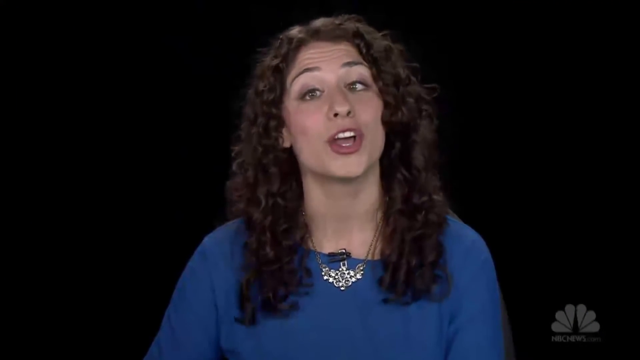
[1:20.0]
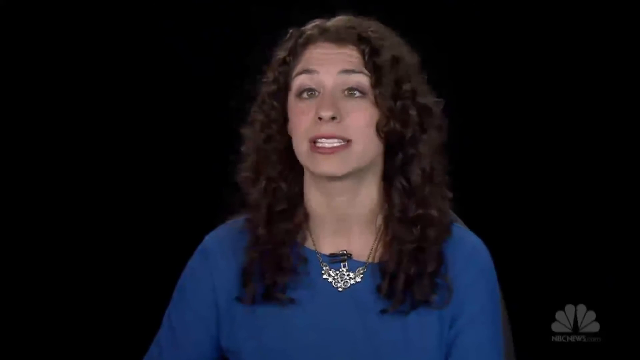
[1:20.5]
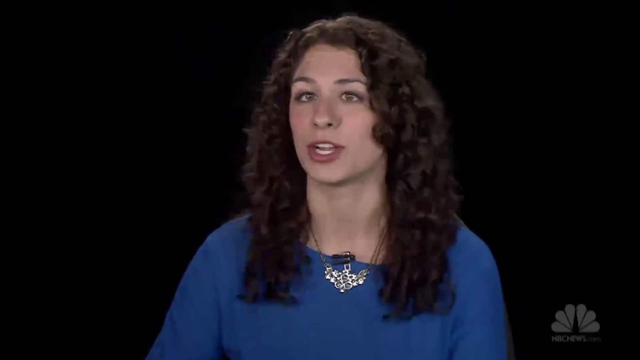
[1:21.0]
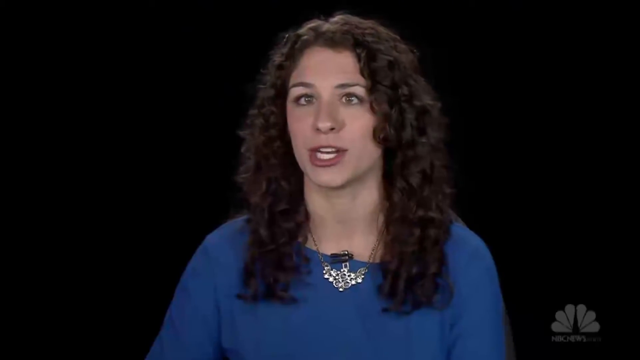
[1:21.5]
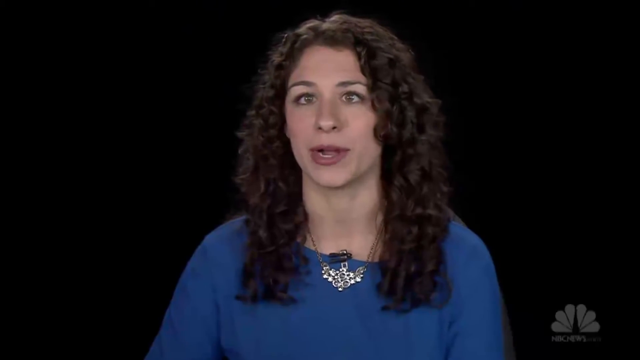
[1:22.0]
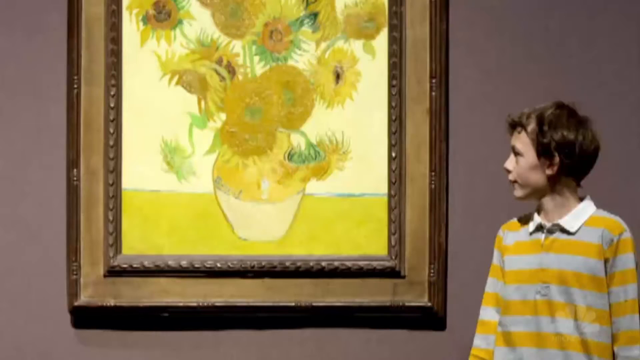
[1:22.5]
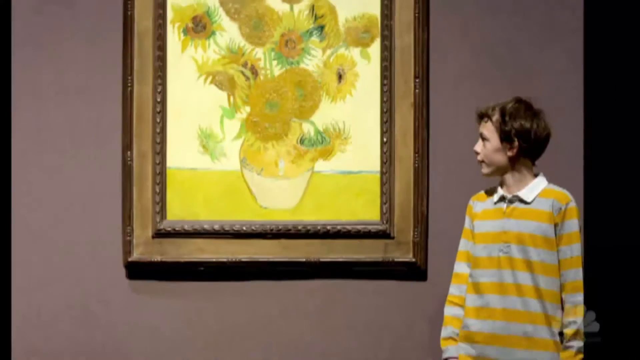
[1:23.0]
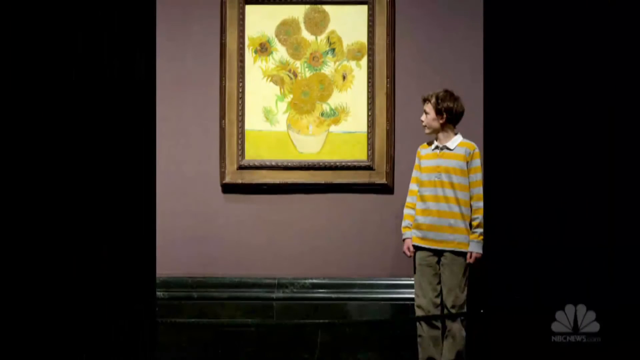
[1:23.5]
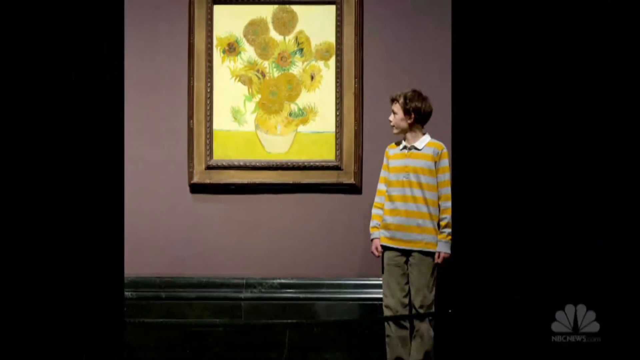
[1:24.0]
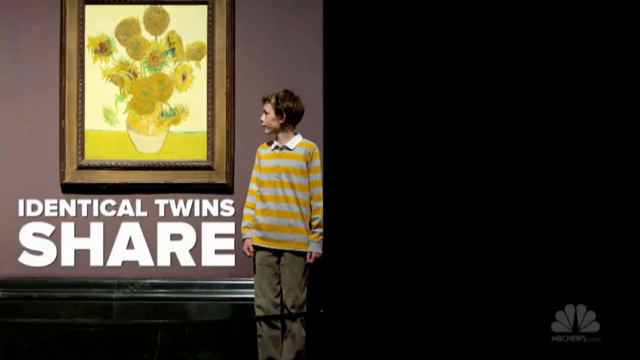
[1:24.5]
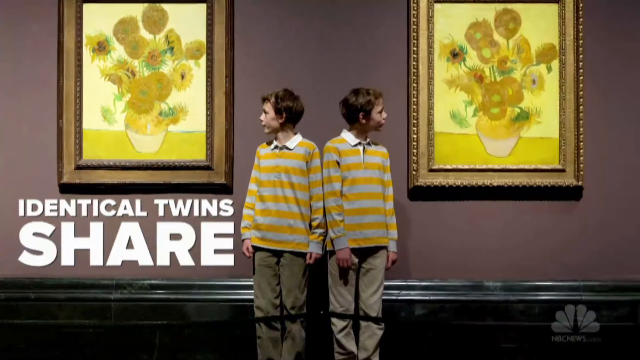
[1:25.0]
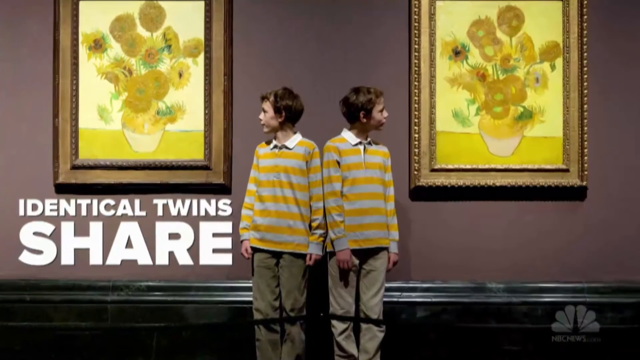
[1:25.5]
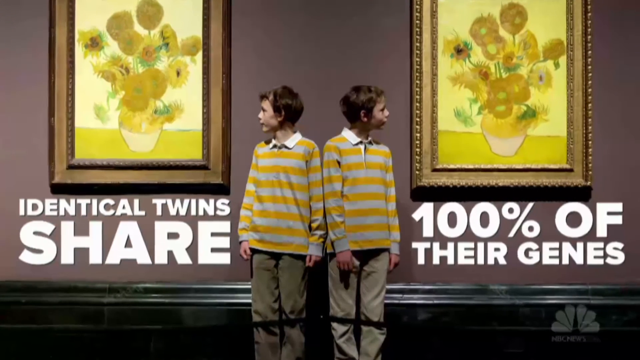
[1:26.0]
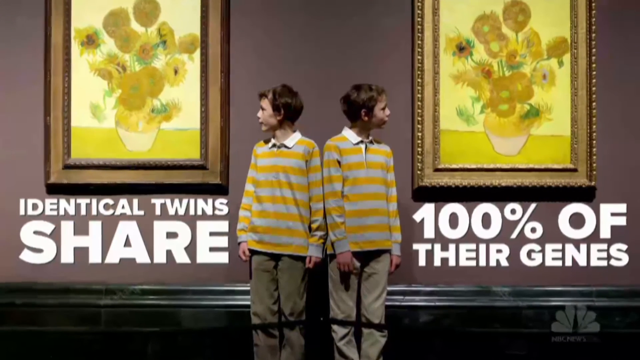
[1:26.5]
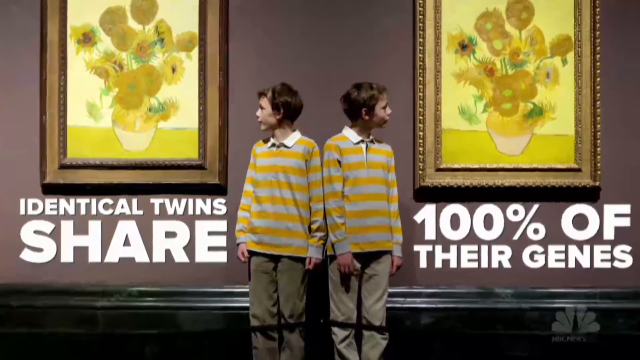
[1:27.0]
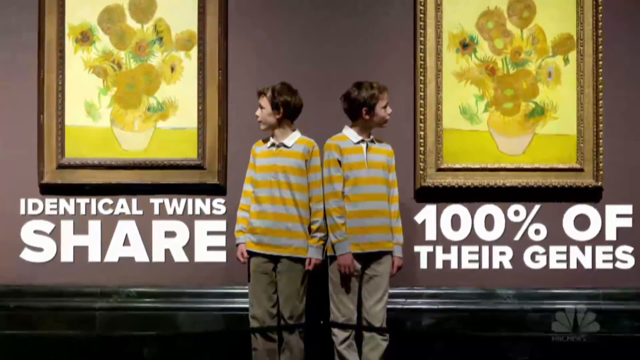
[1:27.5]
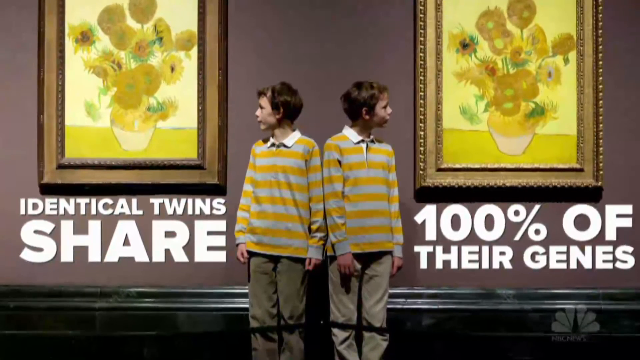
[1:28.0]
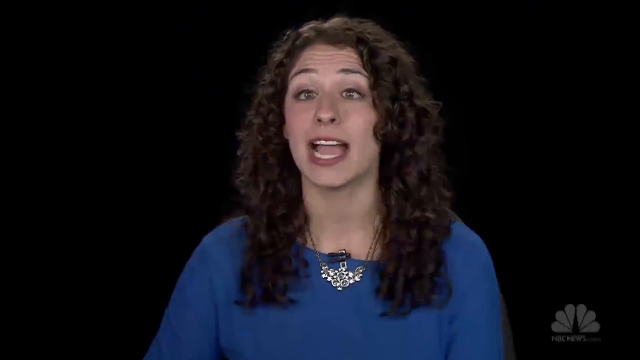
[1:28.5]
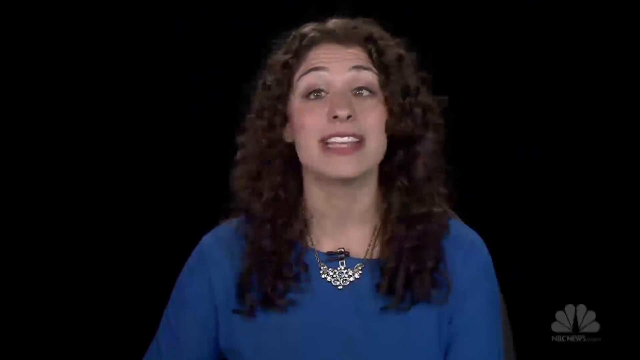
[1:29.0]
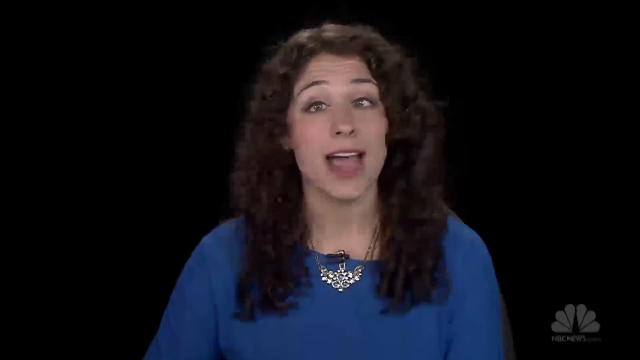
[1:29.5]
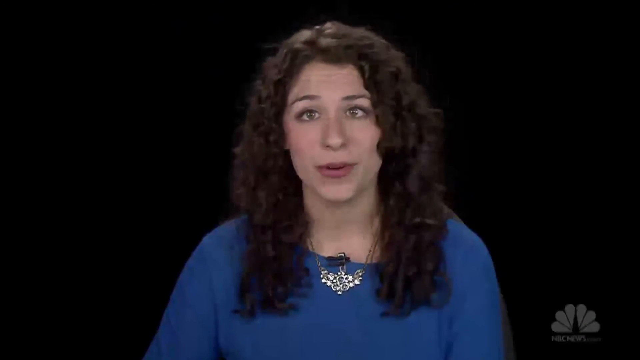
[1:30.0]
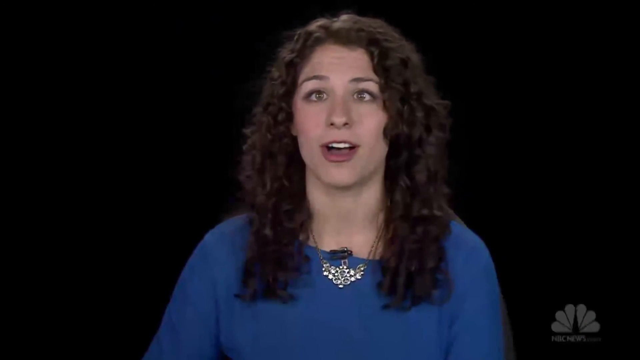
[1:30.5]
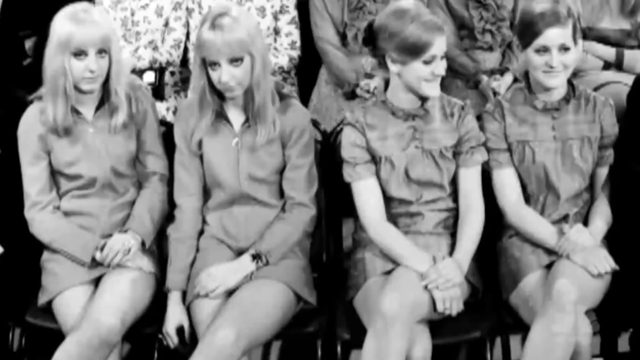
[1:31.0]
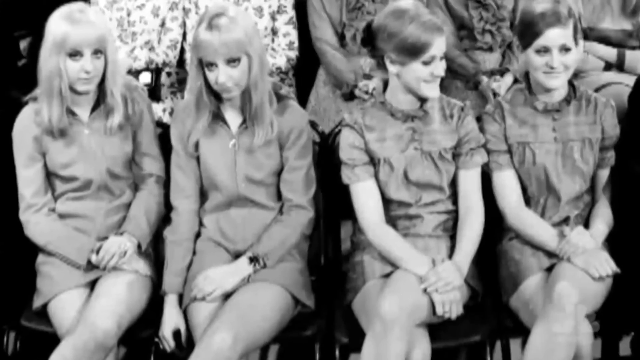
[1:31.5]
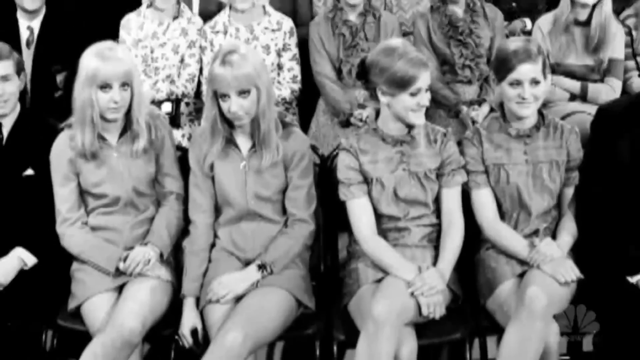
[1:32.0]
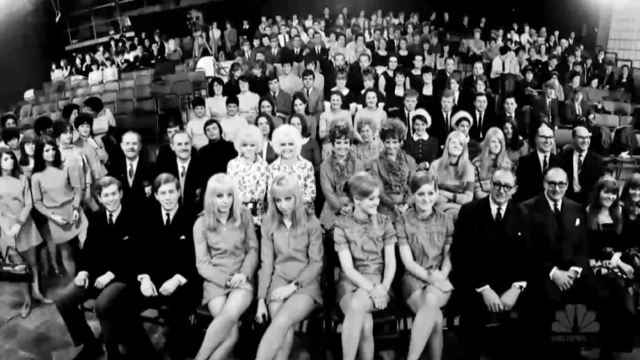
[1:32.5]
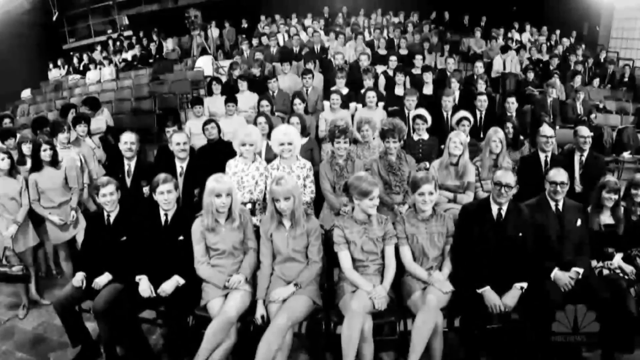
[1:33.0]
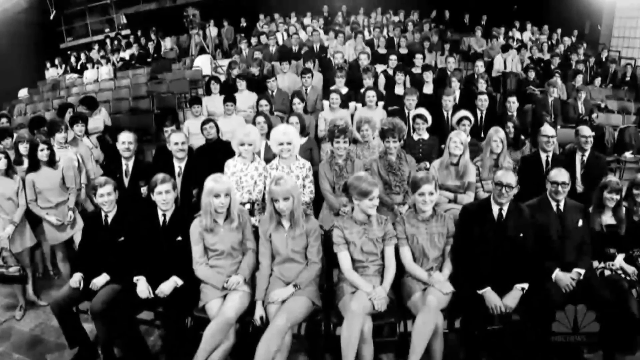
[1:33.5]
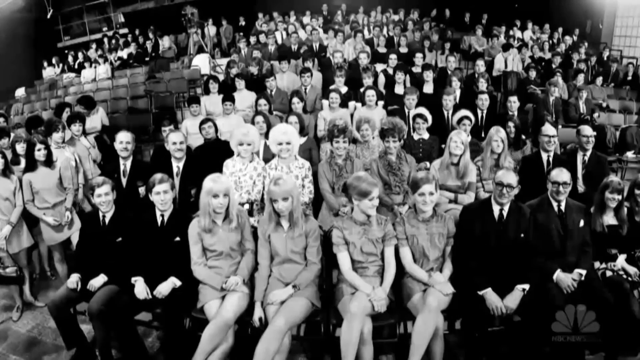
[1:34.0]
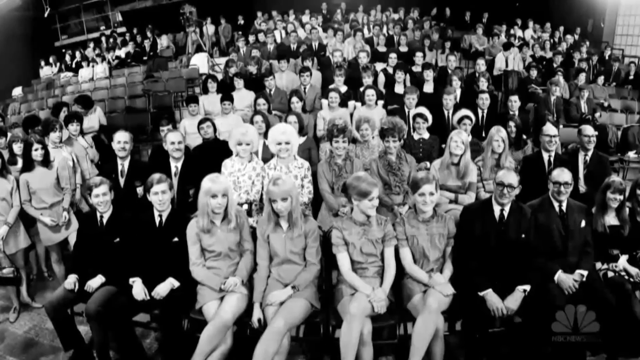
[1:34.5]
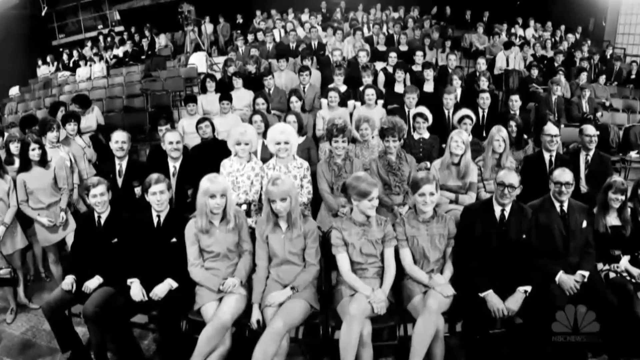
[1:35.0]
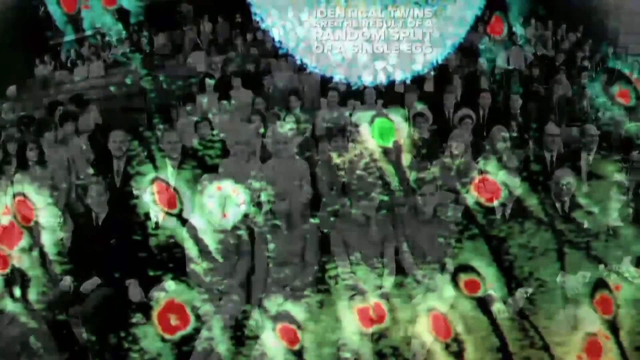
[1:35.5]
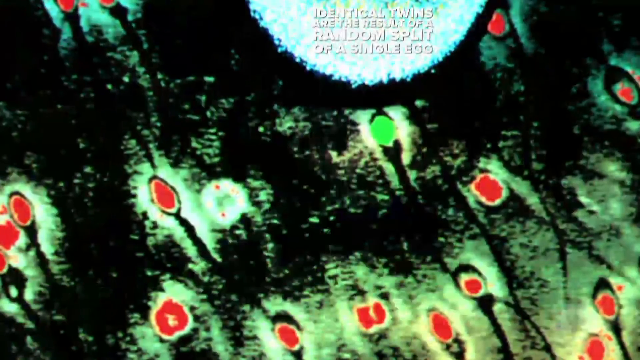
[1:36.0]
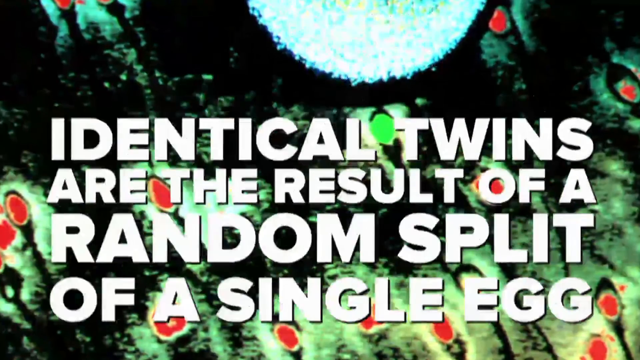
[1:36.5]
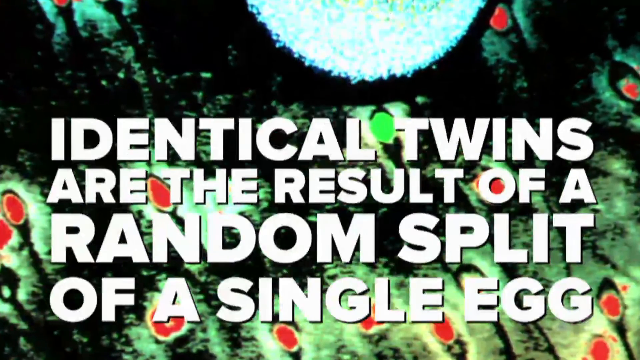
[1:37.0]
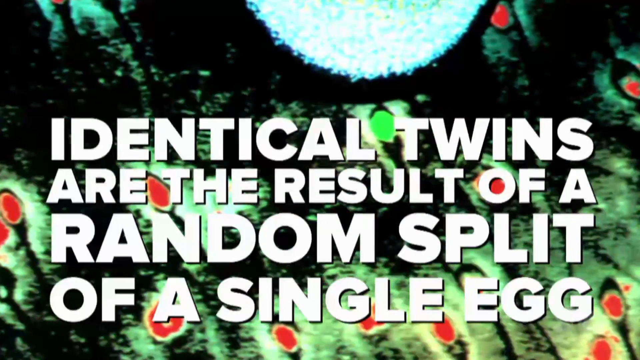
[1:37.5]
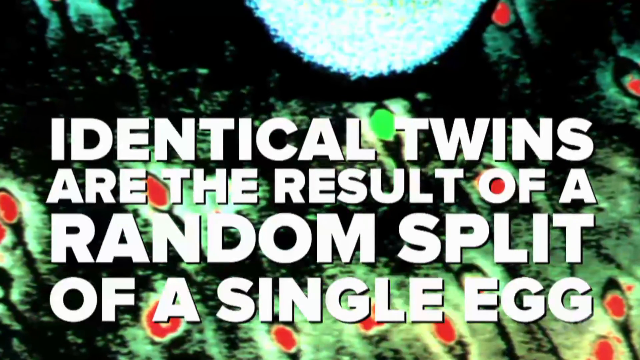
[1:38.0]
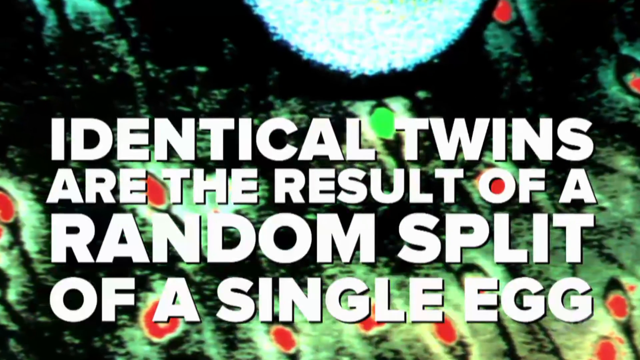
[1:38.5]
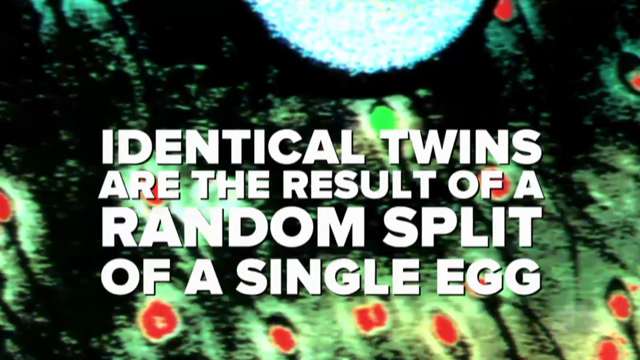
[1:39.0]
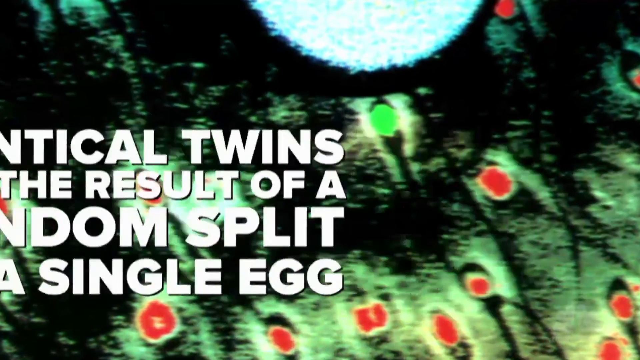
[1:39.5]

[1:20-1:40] On a solid black screen, a woman in a long-sleeved blue shirt is in the middle, visible from the middle of her chest up. She has long black hair and wears a necklace with a silver charm on the end that looks like an angel with its wings open. Her left eye is crossed, aiming to the right, and she speaks directly to the camera. The video cuts to a picture split in half, with two pictures side by side. On the left is a boy with short brown hair, wearing tan pants and a white and yellow striped shirt with a white collar, standing up. To his right is a picture on the wall with a brown frame; the picture has a yellow ground with a white pot sitting on it and yellow flowers growing out of the pot. Underneath, written in white, it says "identical twins share". The right side shows the same exact picture, with the boys back-to-back, and underneath it says "100% of their genes", so the whole screen reads "identical twins share 100% of their genes".